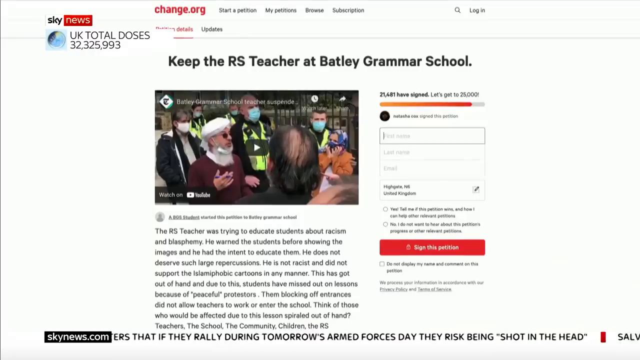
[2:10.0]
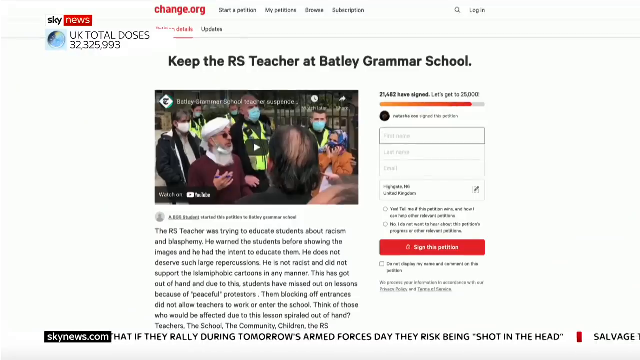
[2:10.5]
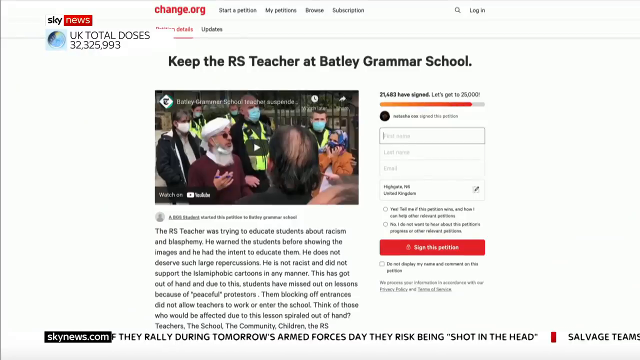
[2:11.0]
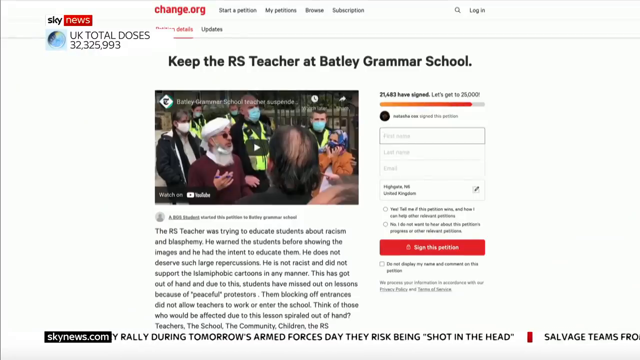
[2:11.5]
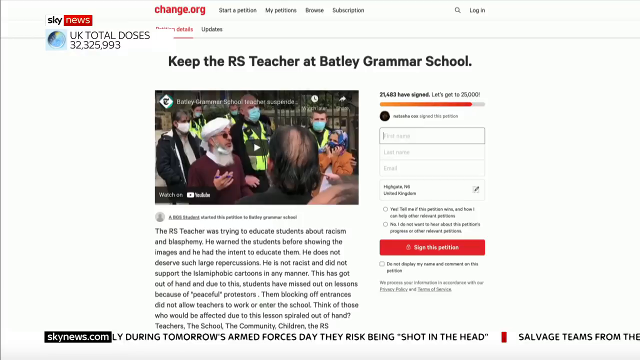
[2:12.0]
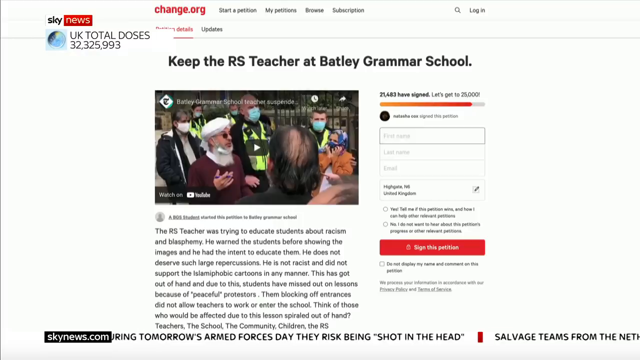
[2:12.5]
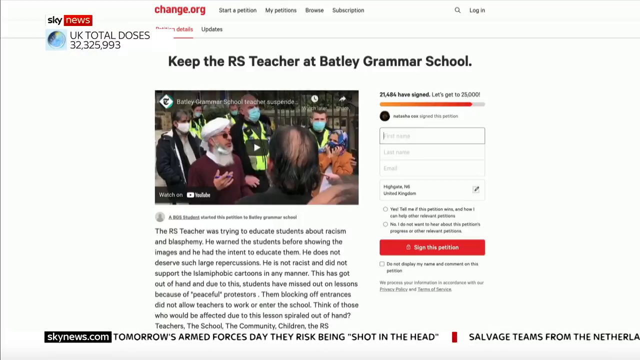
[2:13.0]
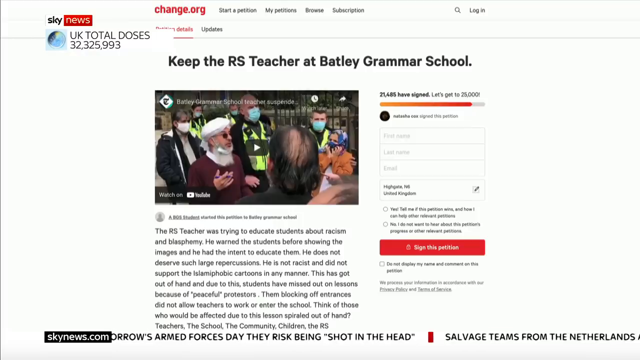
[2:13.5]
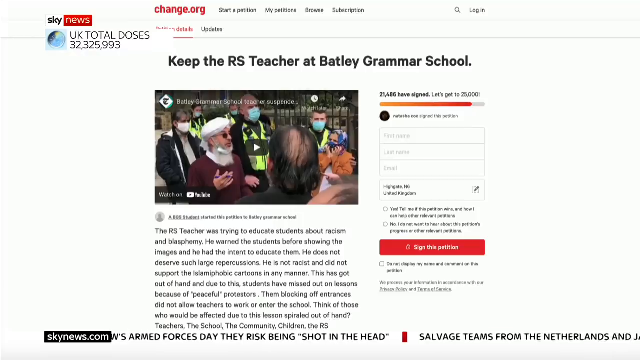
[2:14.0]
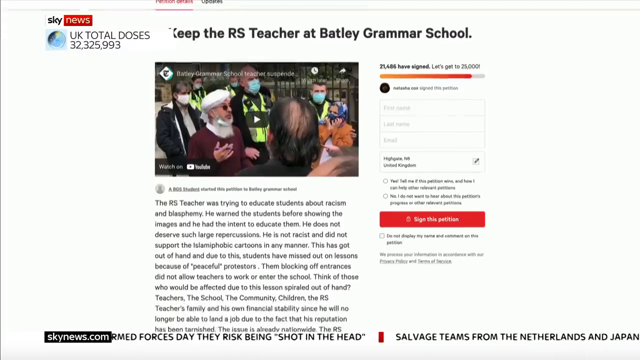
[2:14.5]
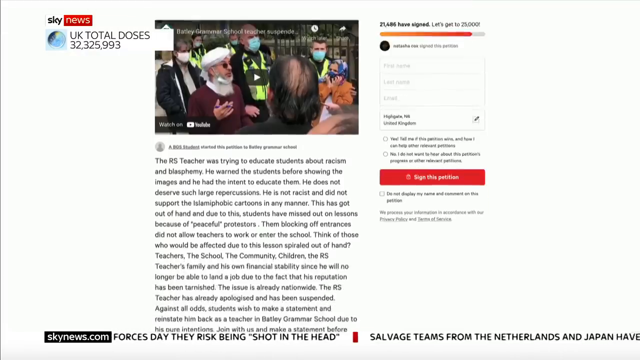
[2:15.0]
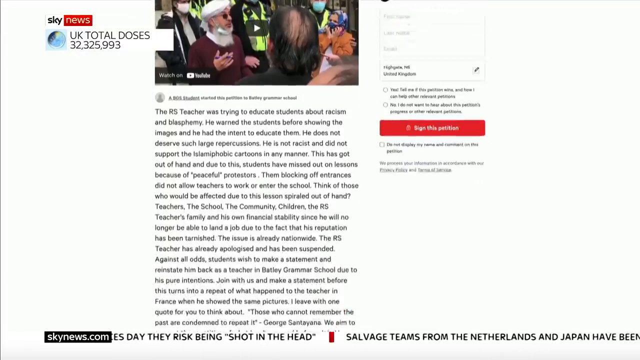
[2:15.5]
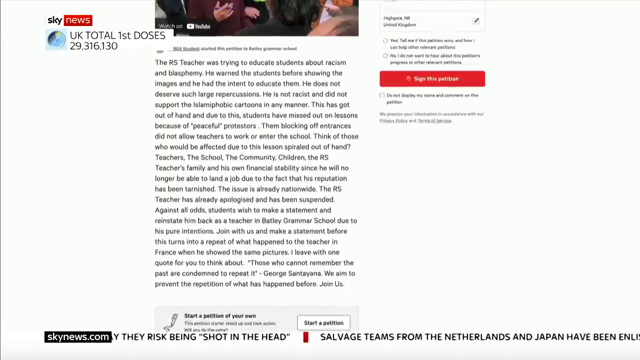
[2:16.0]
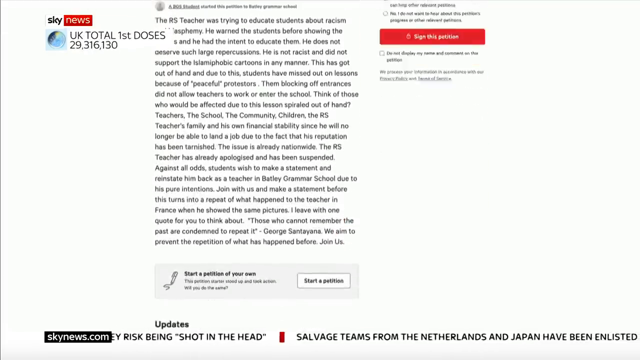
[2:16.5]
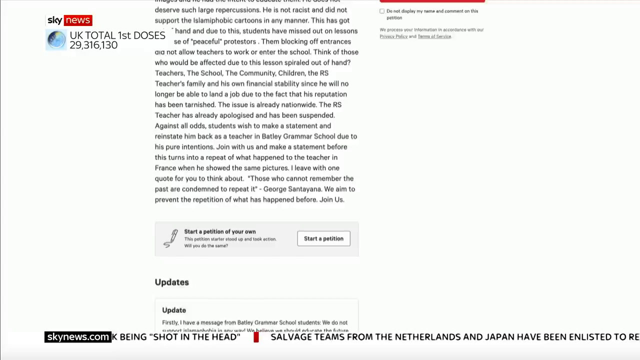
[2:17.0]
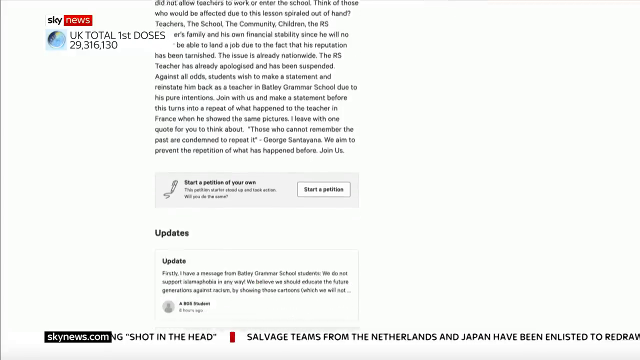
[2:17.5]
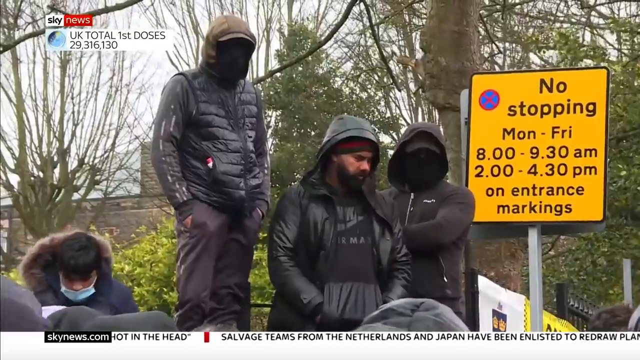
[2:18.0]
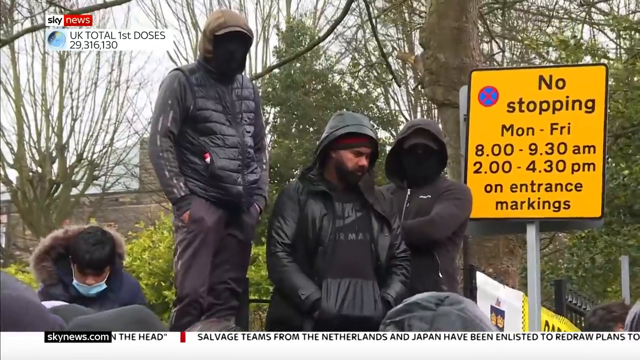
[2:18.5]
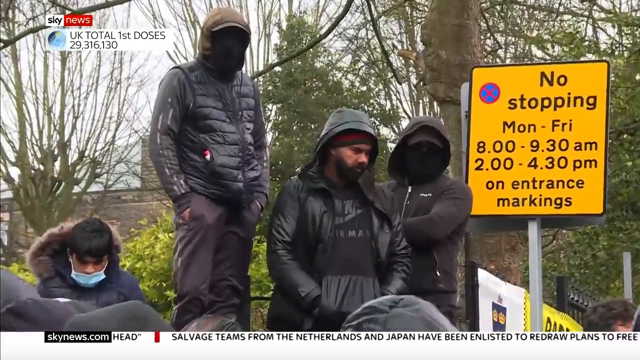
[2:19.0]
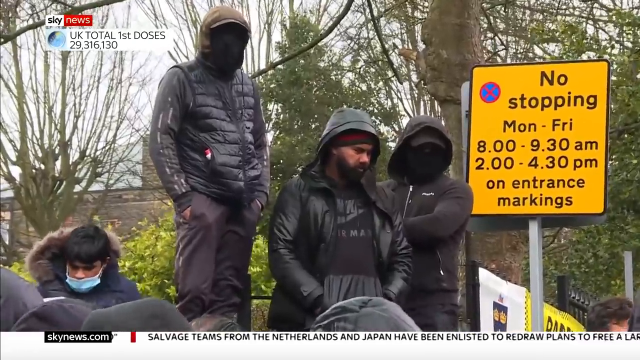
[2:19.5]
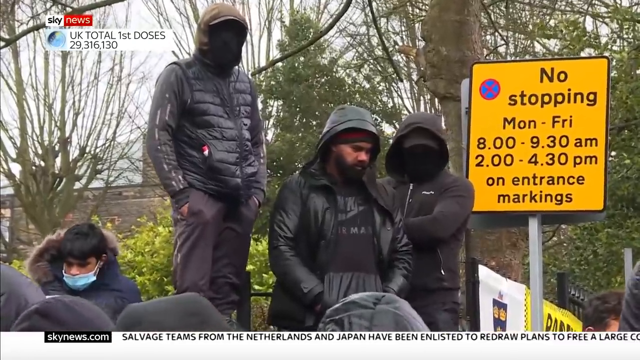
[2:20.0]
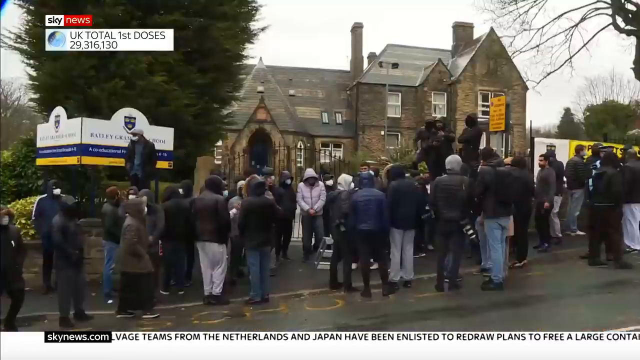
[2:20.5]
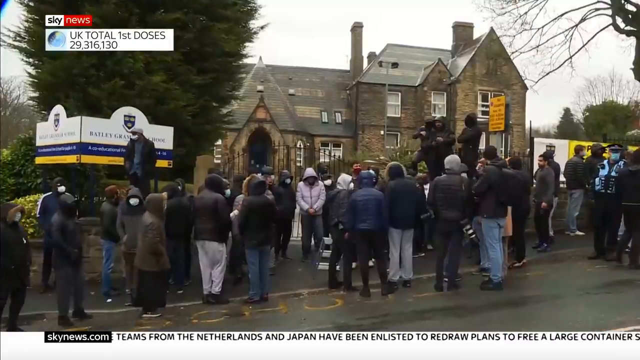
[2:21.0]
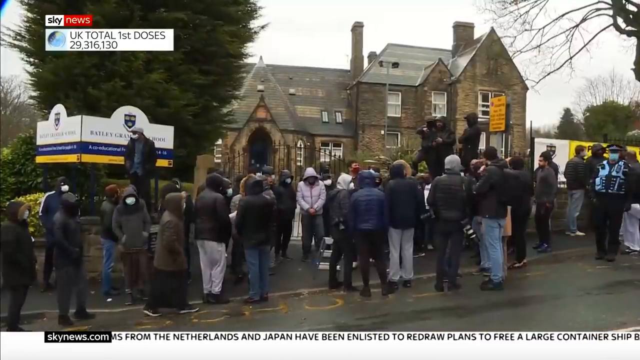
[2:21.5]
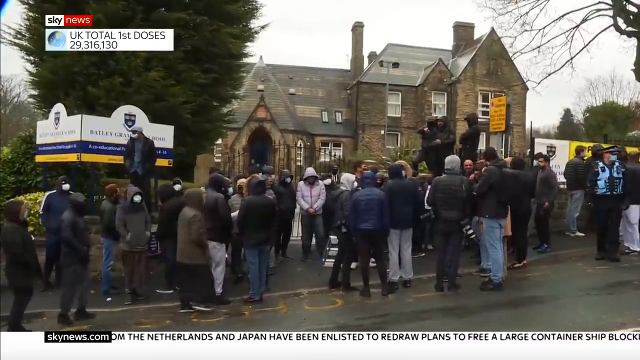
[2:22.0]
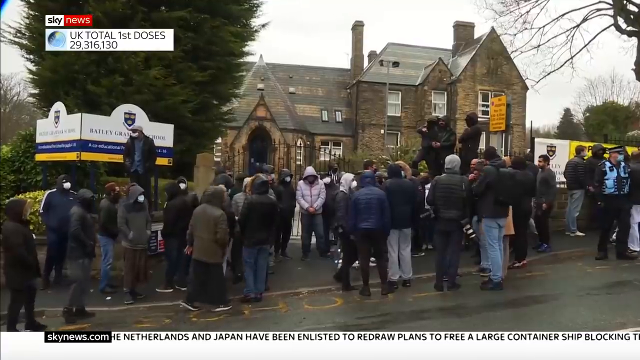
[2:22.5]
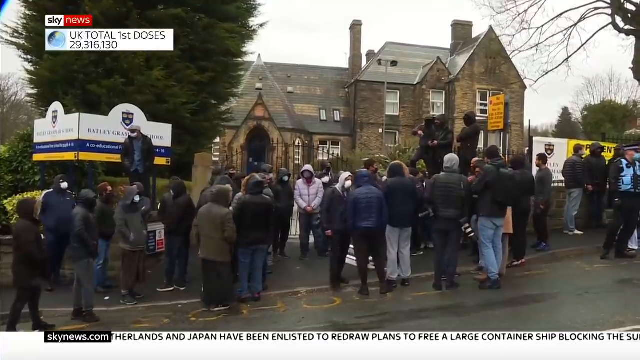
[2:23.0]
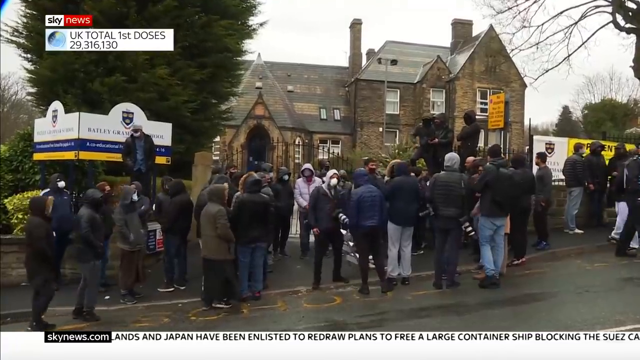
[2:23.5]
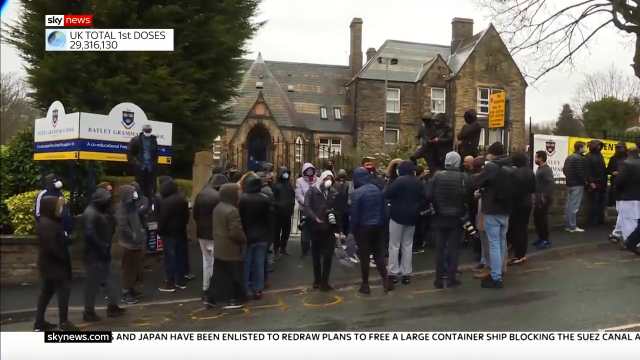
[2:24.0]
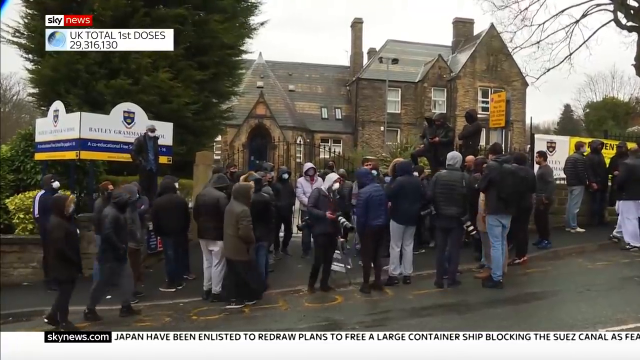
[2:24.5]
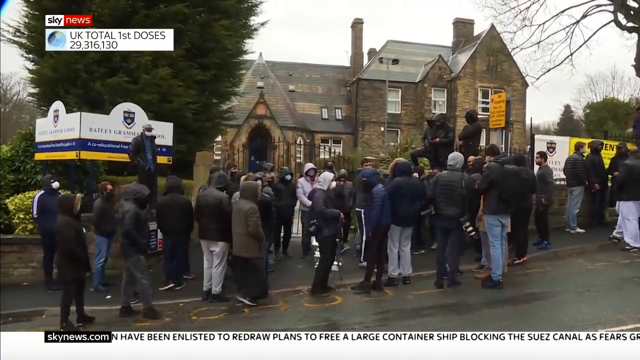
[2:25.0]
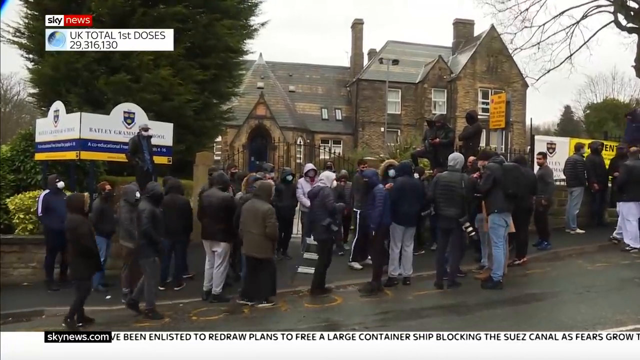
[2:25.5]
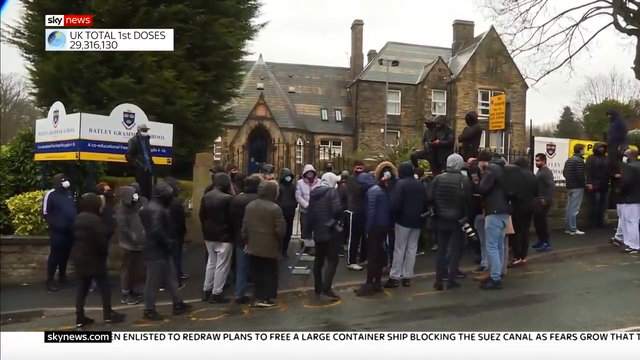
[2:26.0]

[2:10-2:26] Sky News shows "UK total doses 32,325,933". An article appears with a heading ending "teacher at Bartley Grammar School", alongside footage of people outside the school and the policemen. The article reads: "the RS teacher was trying to educate students about racism and blasphemy, he warned the student before showing the image, and he had the intent to educate them, he does not deserve such large repercussions, he is not a racist and did not support the Islamophobic cartoons in any manner, this has got out of hand", and continues: "them blocking of entrances did not allow teachers to go to work or enter the school, think of those who would be affected". The protest outside the school gates appears to be the main subject. The footage returns to the protest, where people wear masks and heavy clothes, and people with cameras take photos.